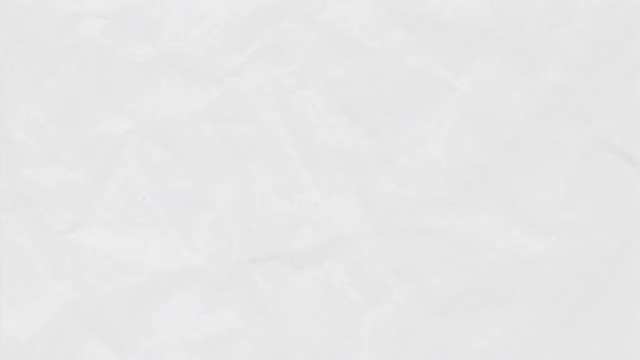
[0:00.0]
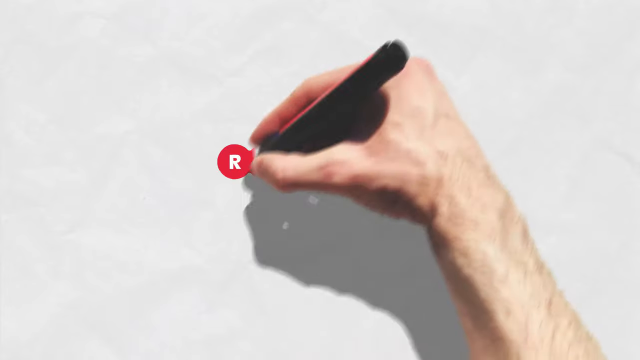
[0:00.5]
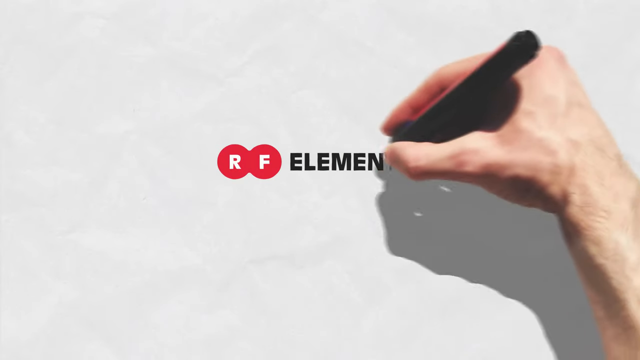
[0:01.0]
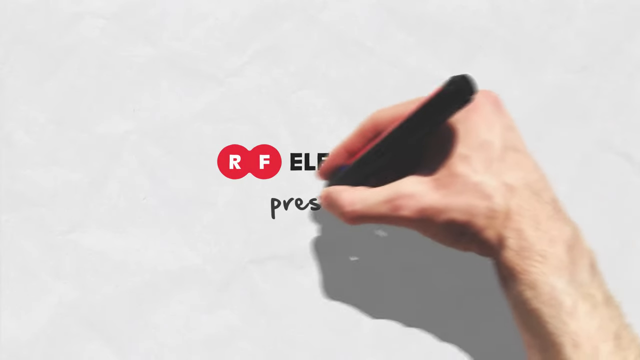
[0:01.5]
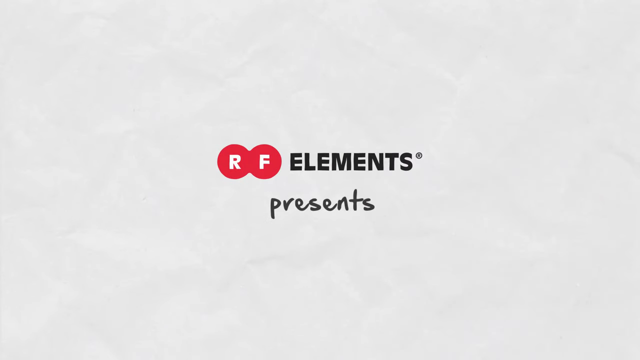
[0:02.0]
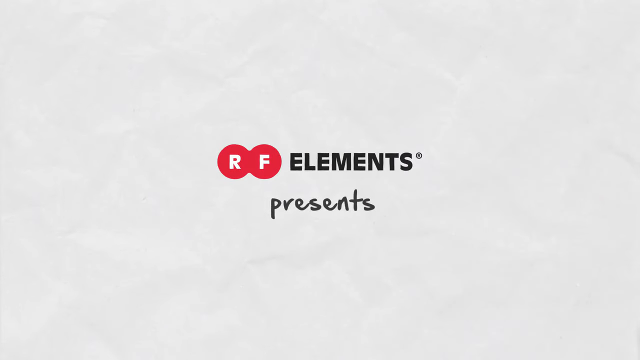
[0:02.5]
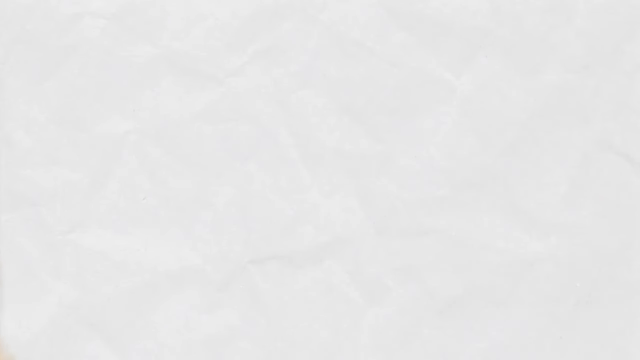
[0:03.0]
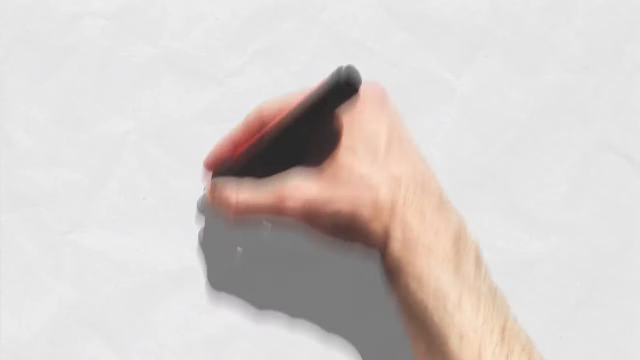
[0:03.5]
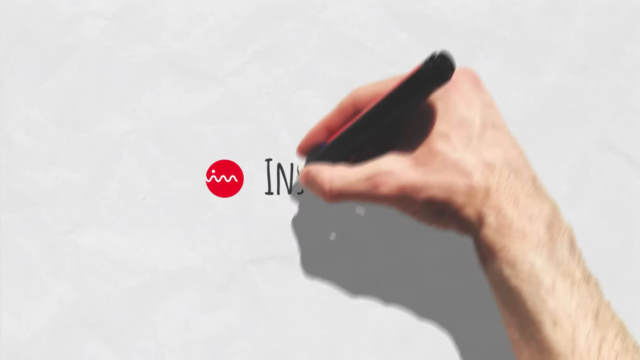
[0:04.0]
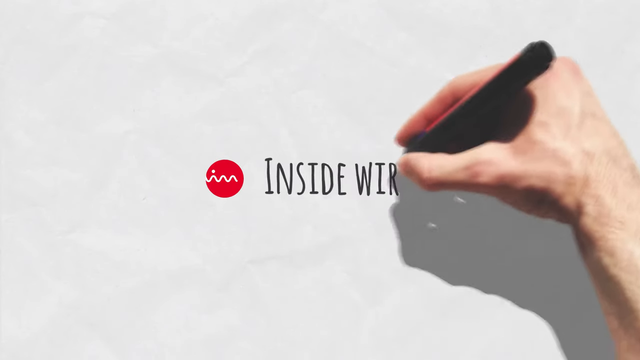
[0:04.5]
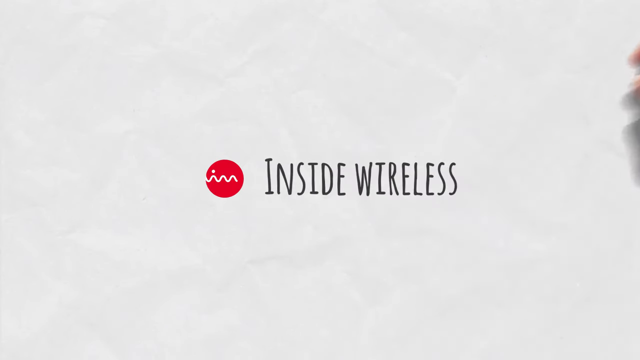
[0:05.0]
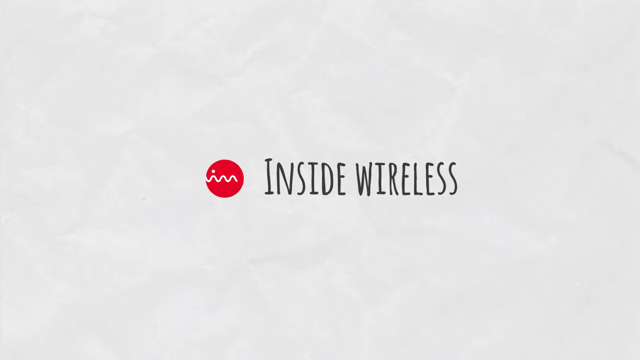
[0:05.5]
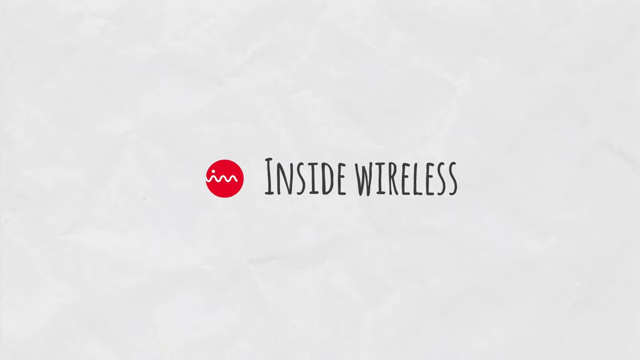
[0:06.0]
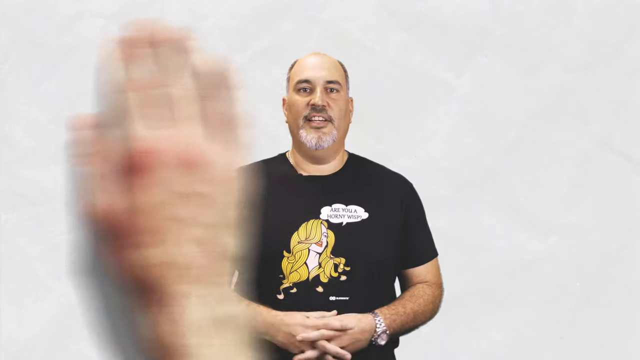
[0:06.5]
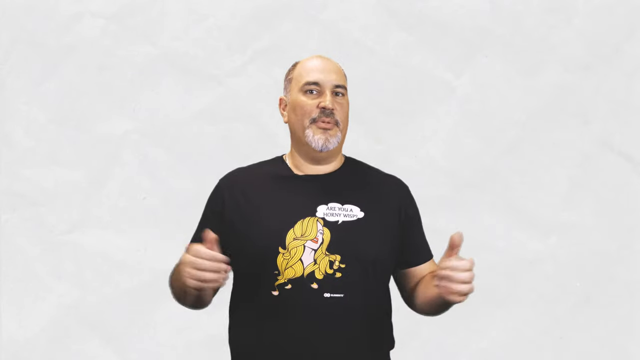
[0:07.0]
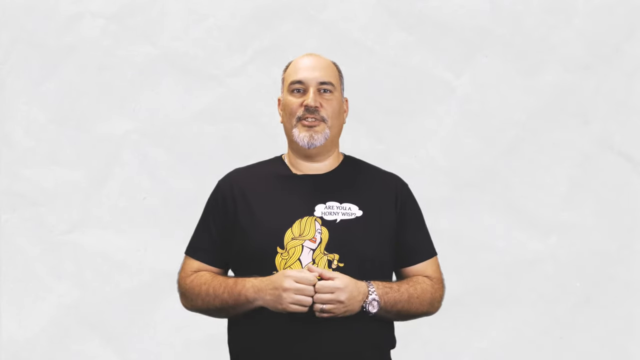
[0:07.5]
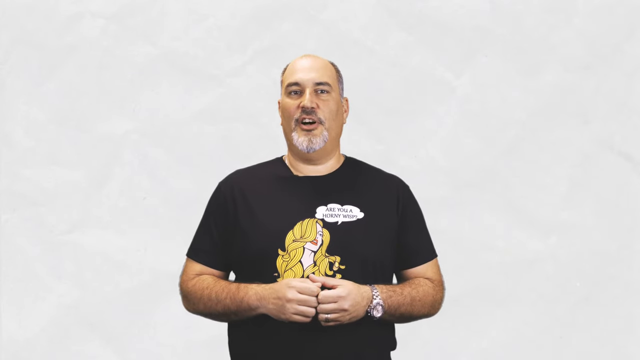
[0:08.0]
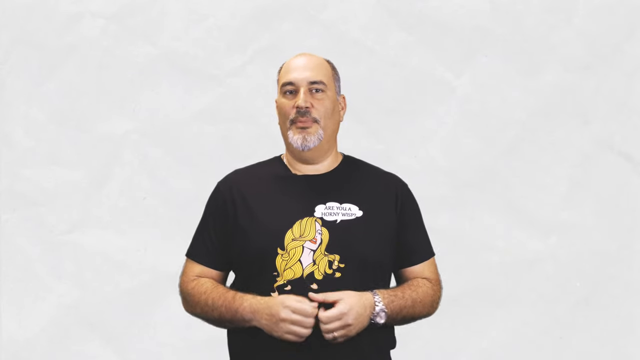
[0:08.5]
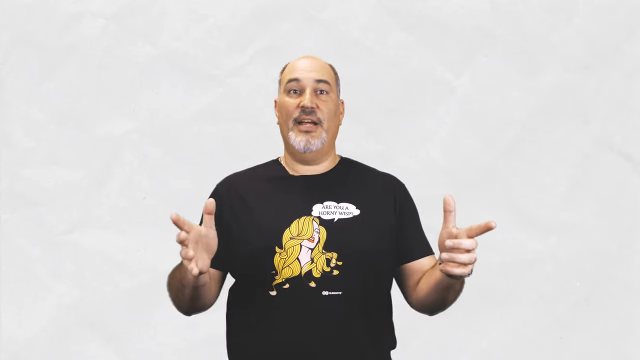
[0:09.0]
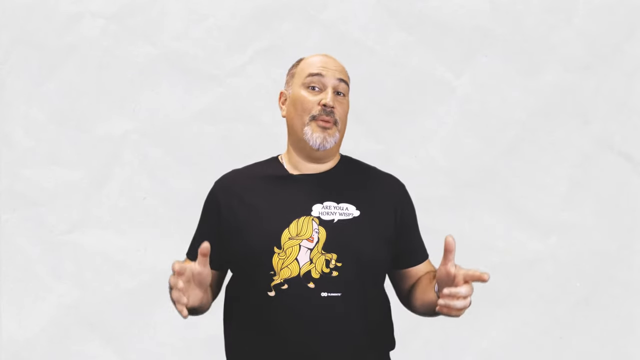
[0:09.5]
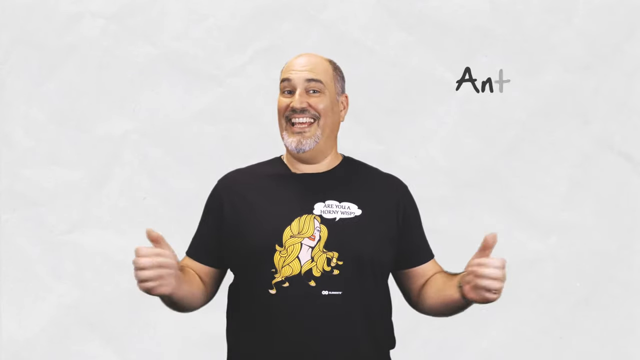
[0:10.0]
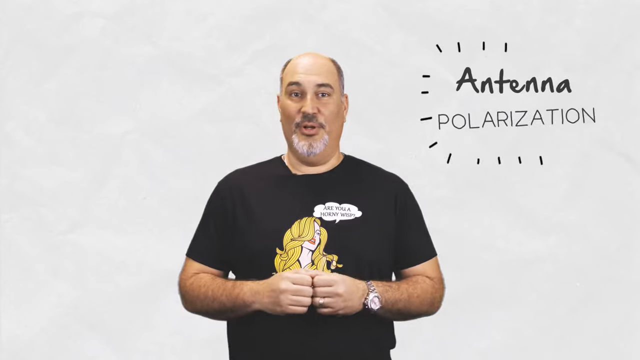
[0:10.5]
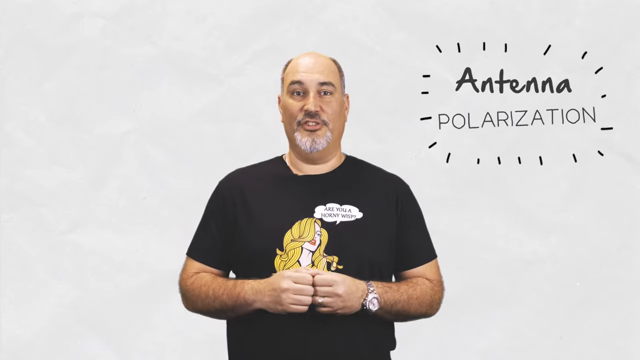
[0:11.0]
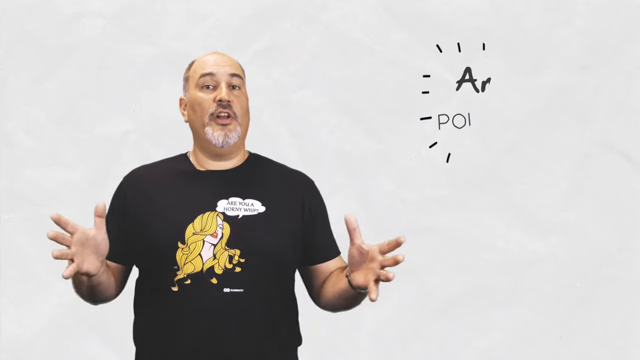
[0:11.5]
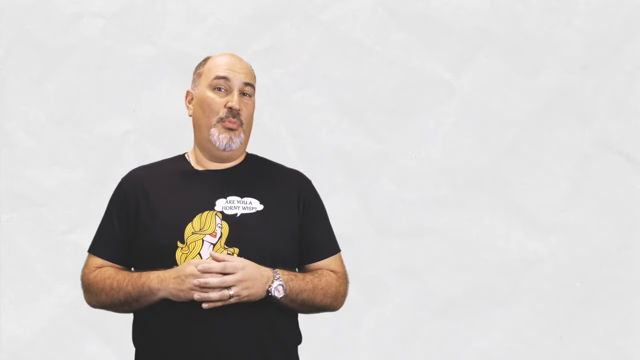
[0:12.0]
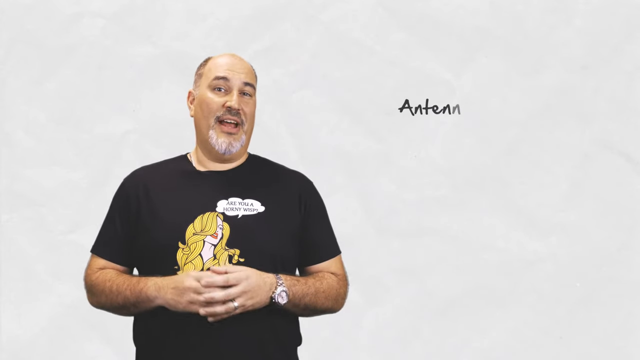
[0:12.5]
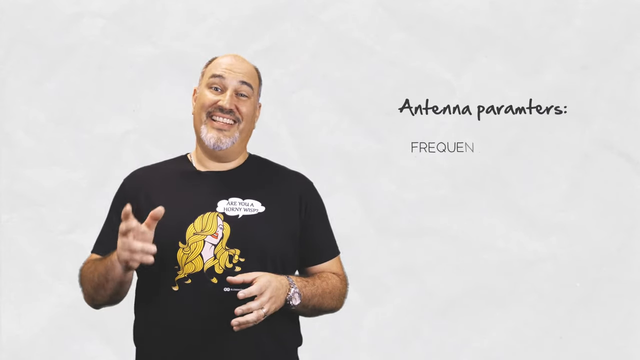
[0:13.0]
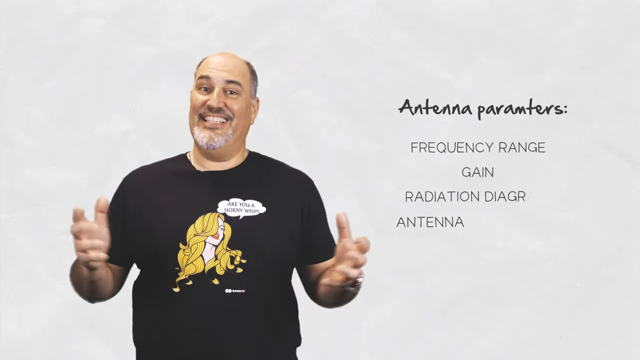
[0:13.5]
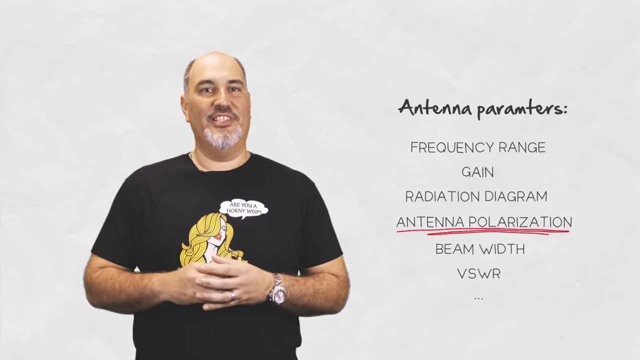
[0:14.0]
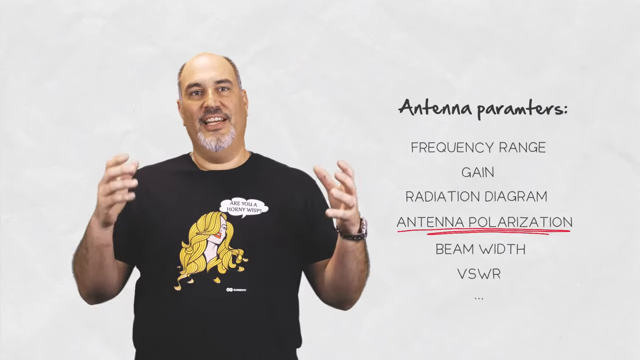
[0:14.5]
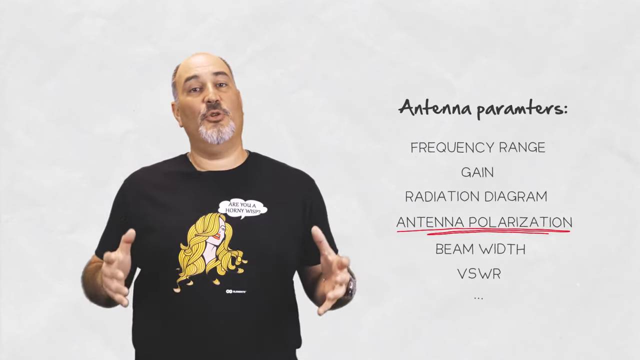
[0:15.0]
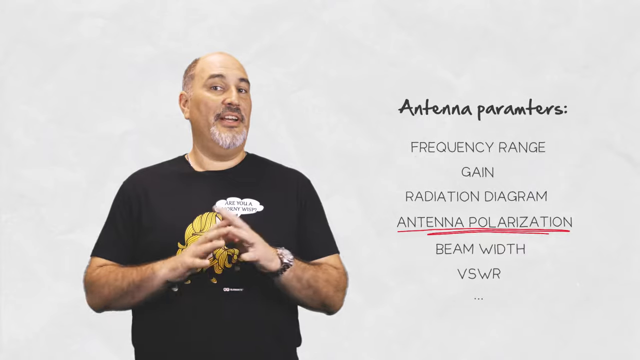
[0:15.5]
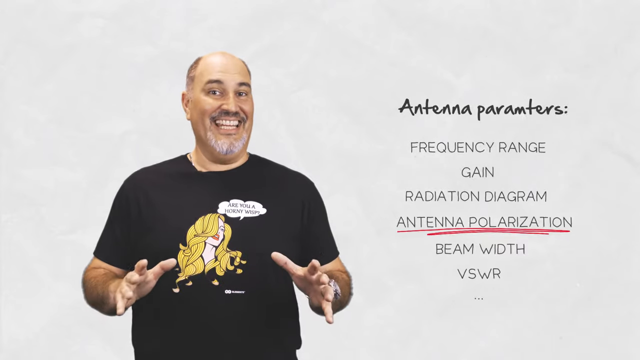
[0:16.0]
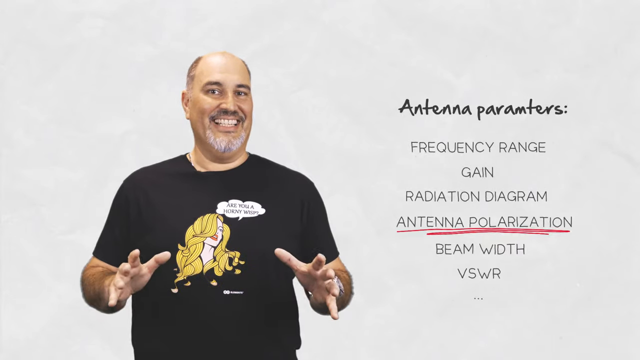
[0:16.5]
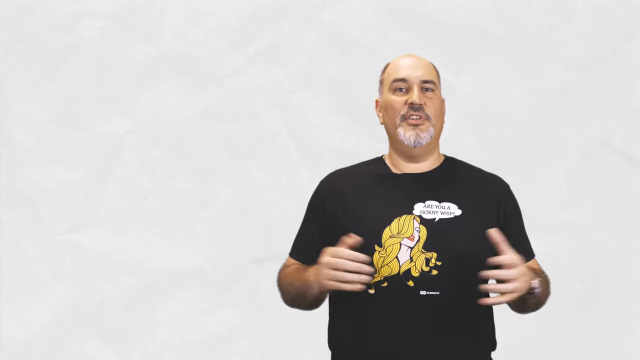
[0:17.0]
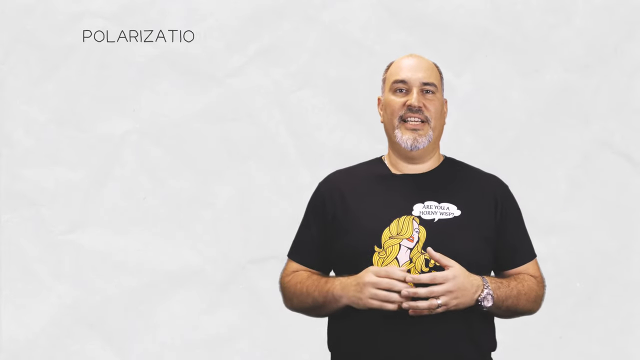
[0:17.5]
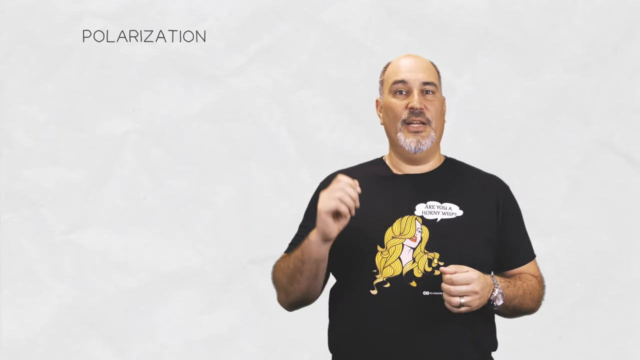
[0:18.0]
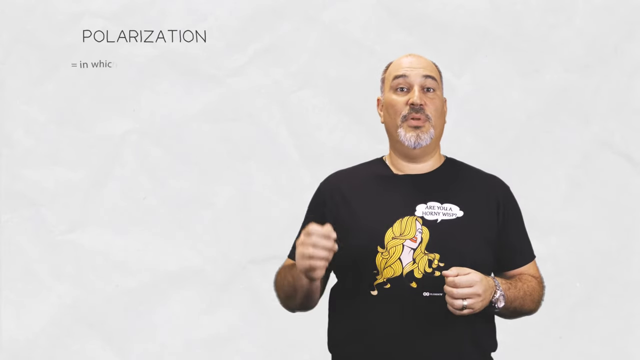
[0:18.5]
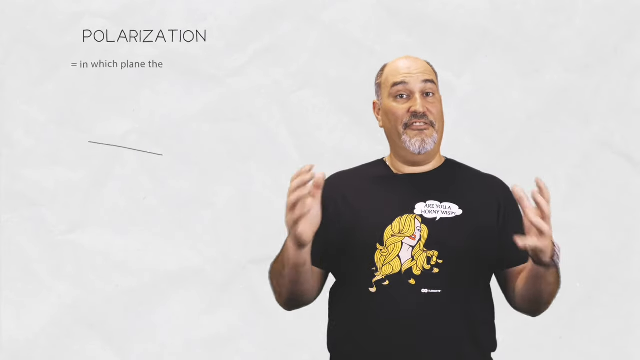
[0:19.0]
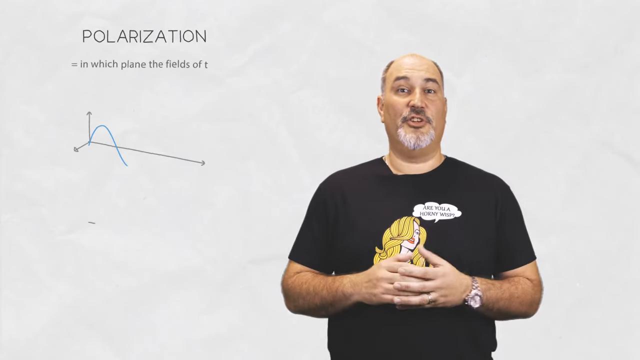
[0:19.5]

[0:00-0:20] Some text appears on screen, followed by the words "inside wireless." A man in a black t-shirt then talks while looking directly at the camera, and there is an image of a woman. Behind him are the words "antenna polarization." He keeps talking, lifting his hands up and down. Words appear reading "antenna parameters, frequency range, gain radiation, diagram, antenna polarization," and the man continues talking and moving his hands up and down as he explains something.